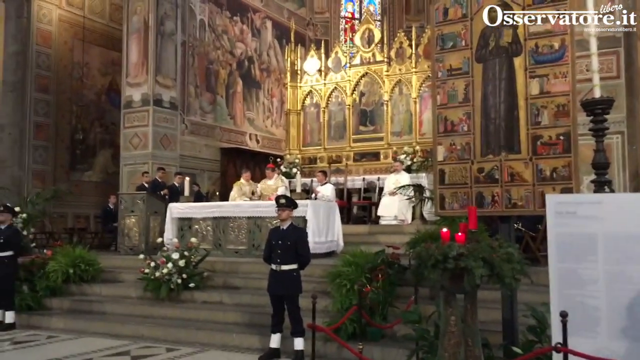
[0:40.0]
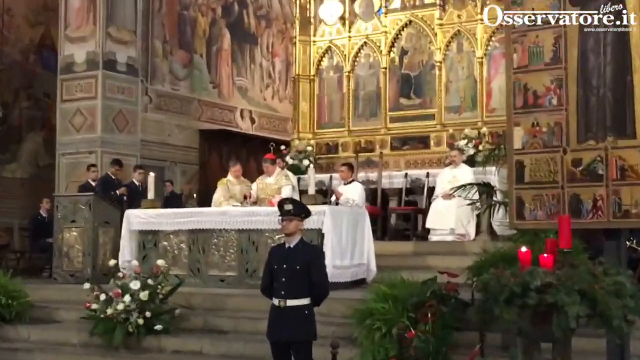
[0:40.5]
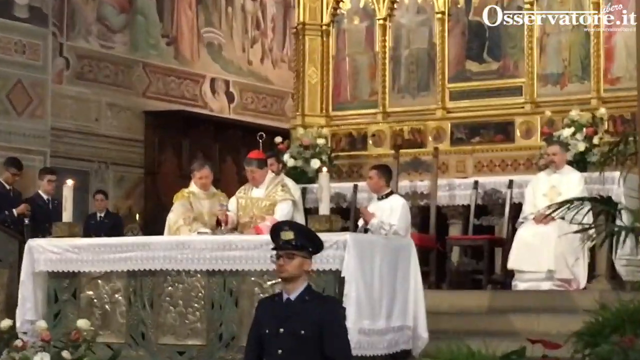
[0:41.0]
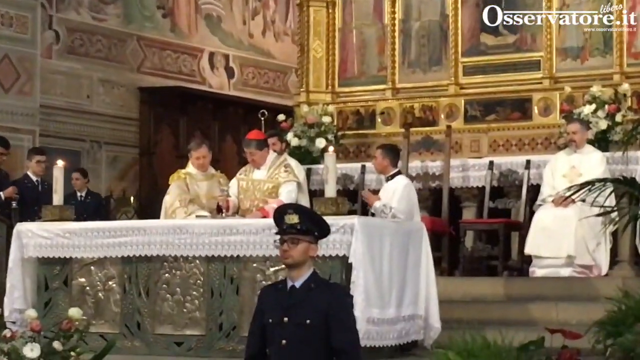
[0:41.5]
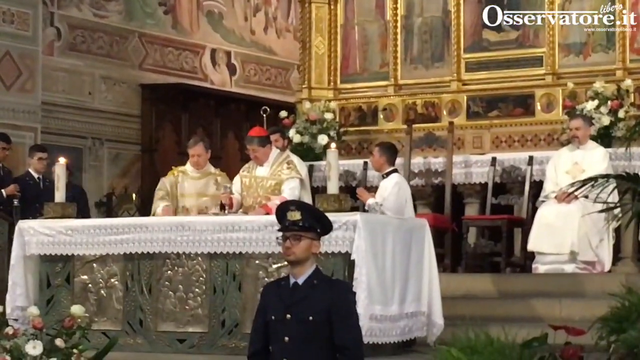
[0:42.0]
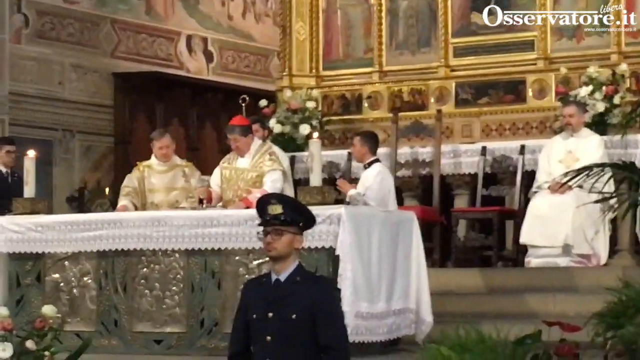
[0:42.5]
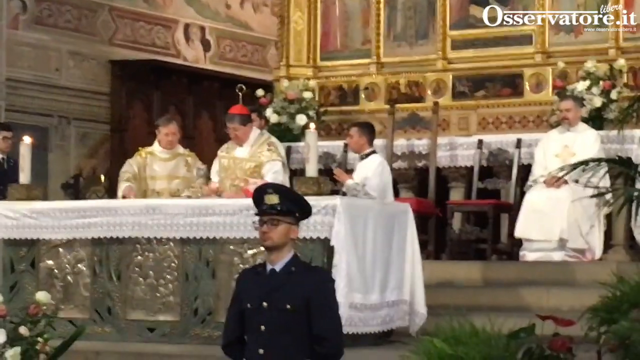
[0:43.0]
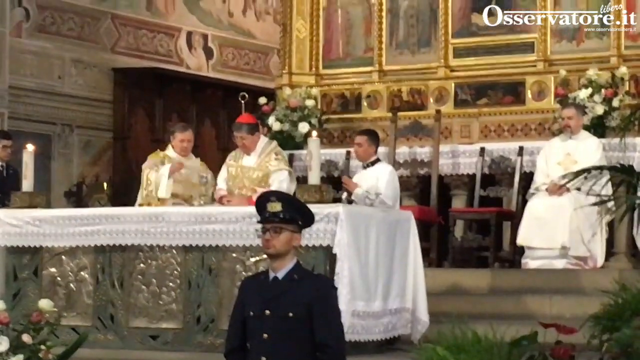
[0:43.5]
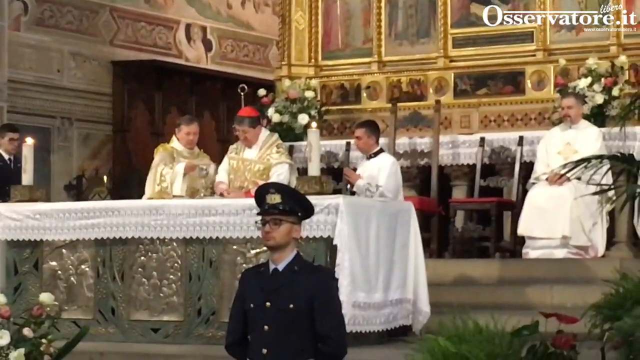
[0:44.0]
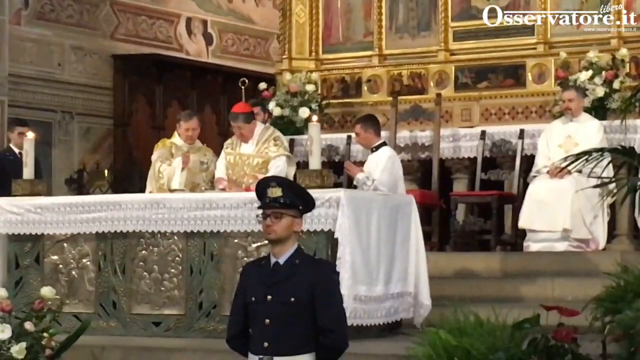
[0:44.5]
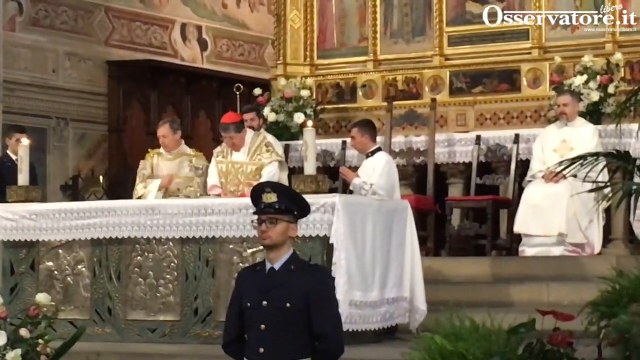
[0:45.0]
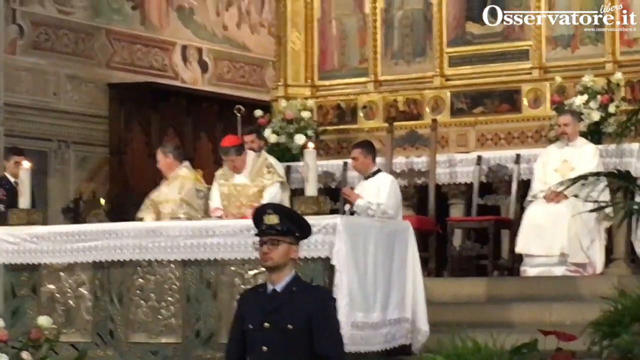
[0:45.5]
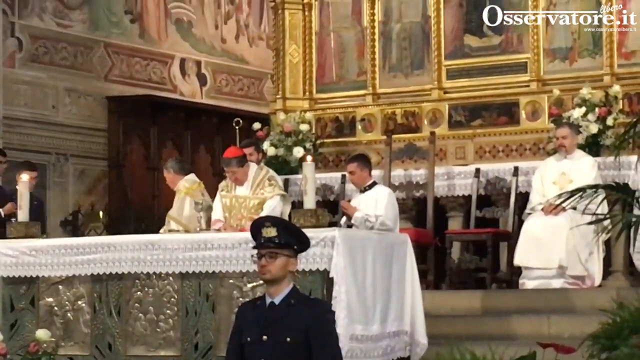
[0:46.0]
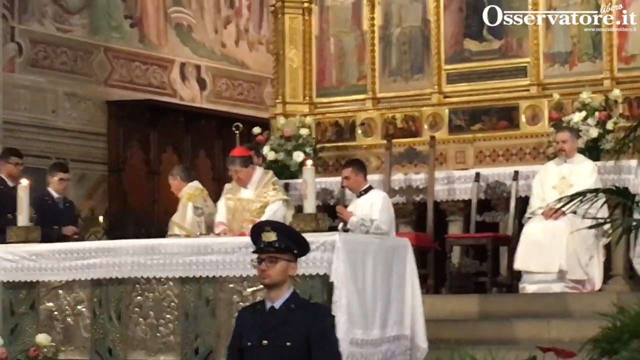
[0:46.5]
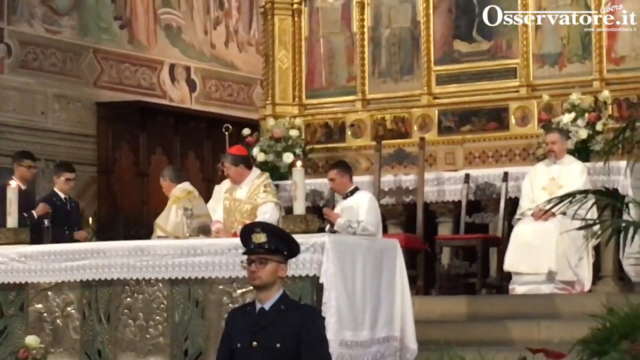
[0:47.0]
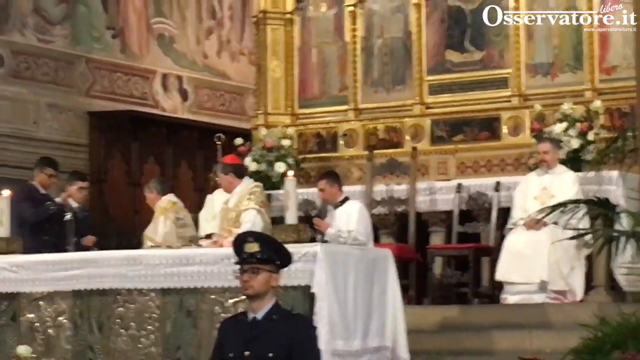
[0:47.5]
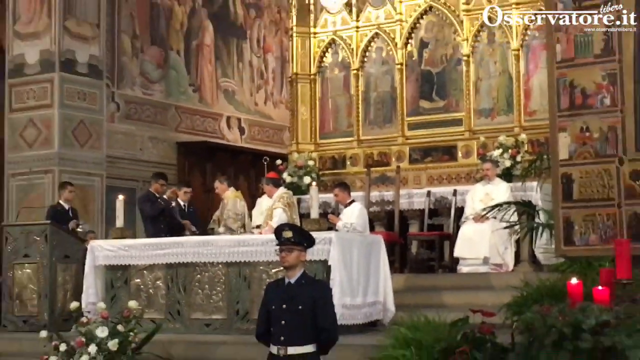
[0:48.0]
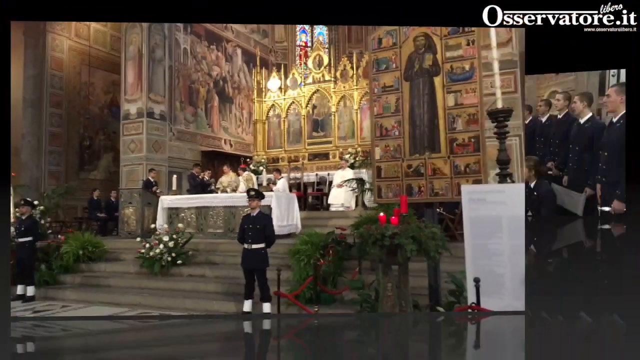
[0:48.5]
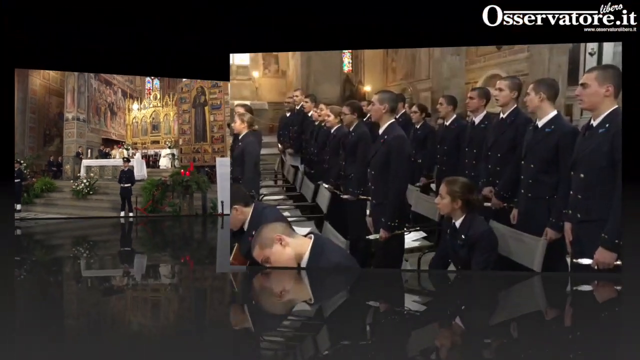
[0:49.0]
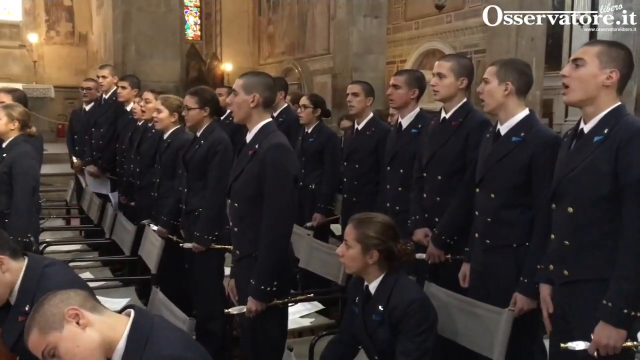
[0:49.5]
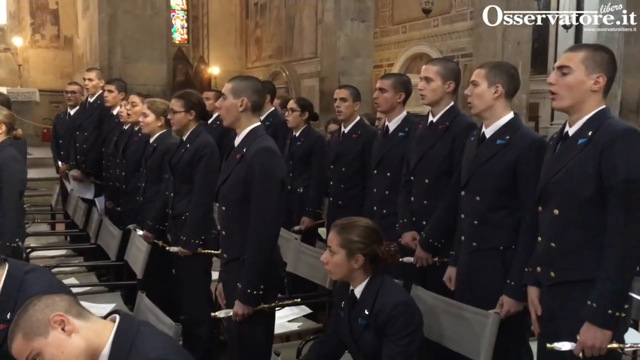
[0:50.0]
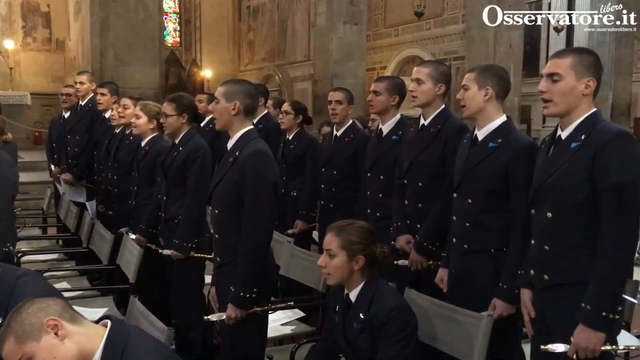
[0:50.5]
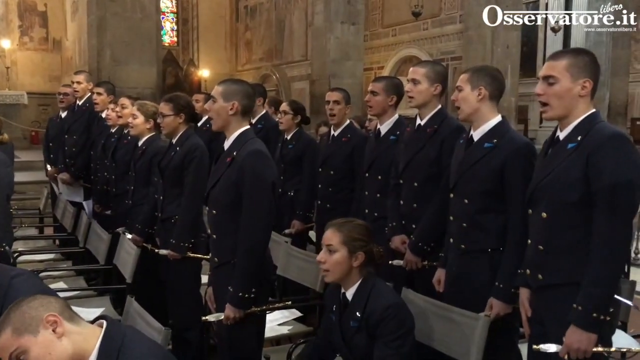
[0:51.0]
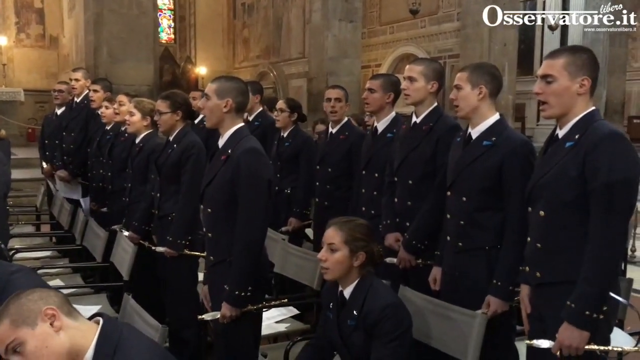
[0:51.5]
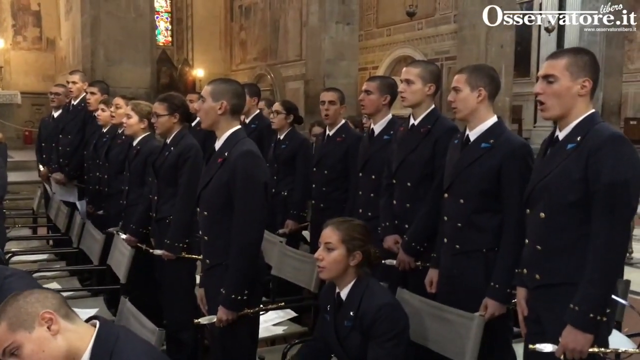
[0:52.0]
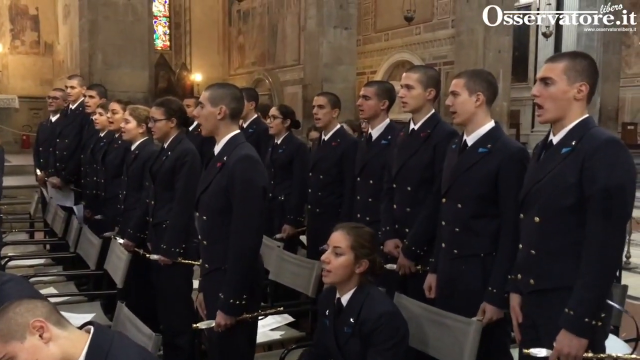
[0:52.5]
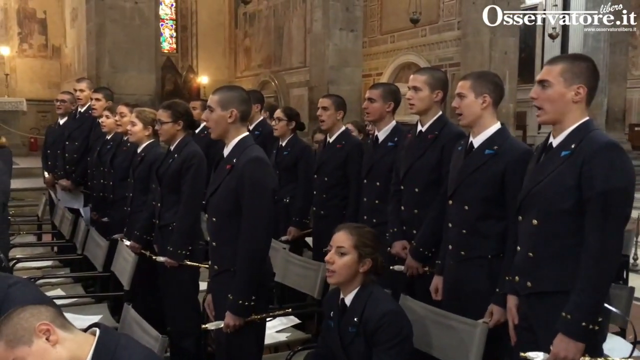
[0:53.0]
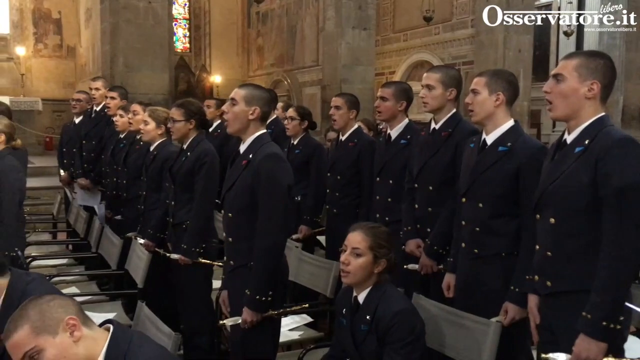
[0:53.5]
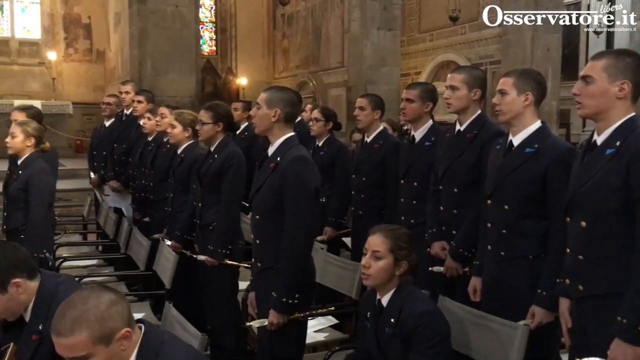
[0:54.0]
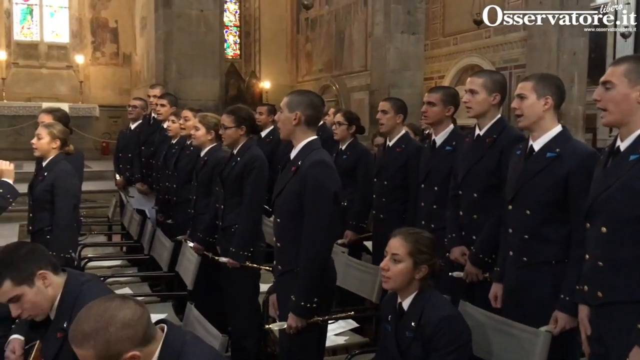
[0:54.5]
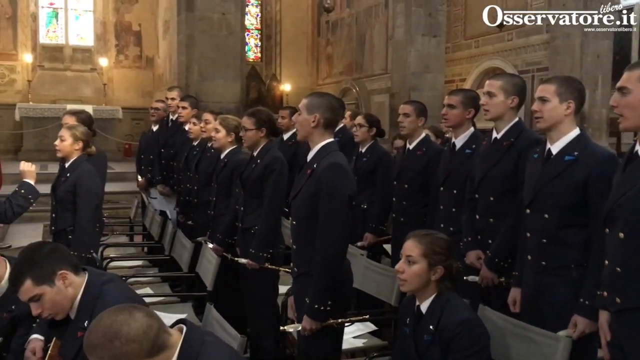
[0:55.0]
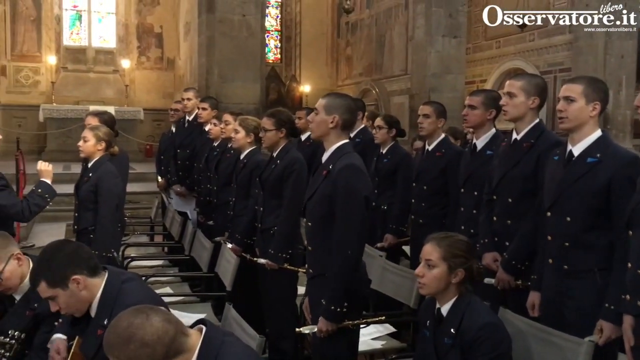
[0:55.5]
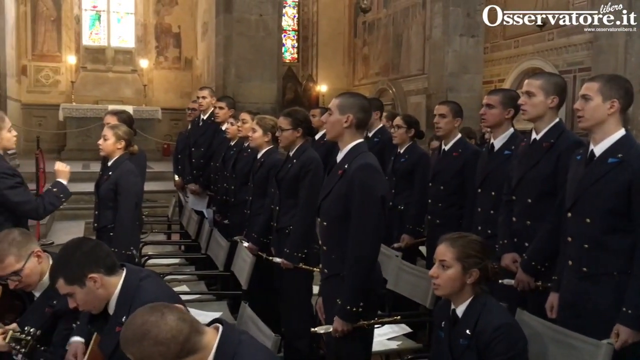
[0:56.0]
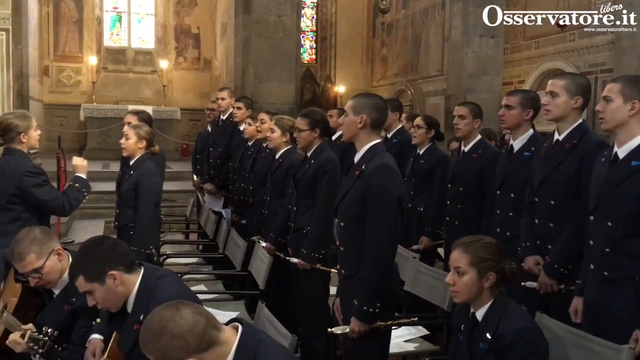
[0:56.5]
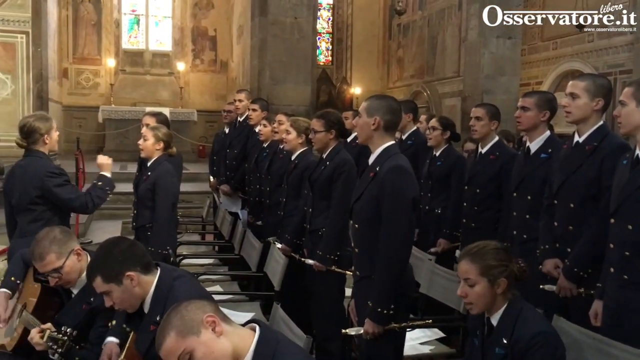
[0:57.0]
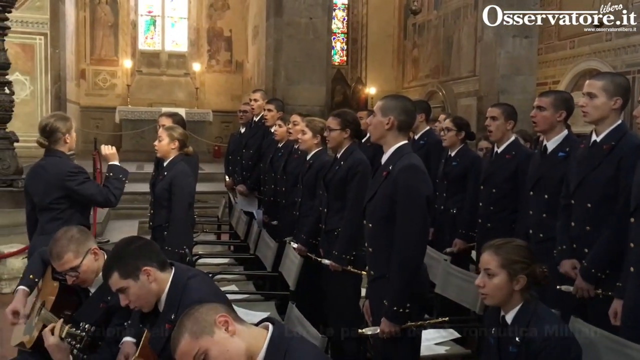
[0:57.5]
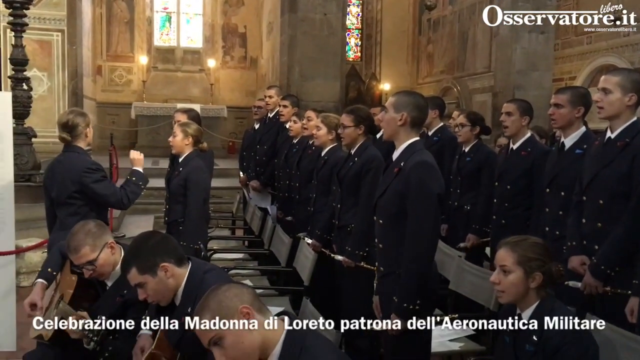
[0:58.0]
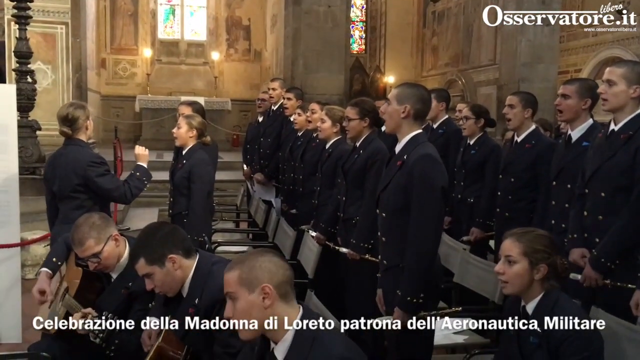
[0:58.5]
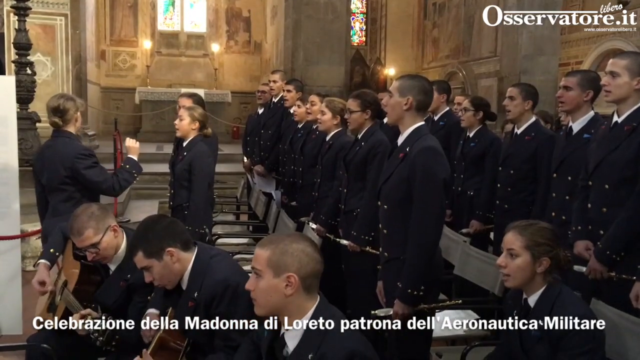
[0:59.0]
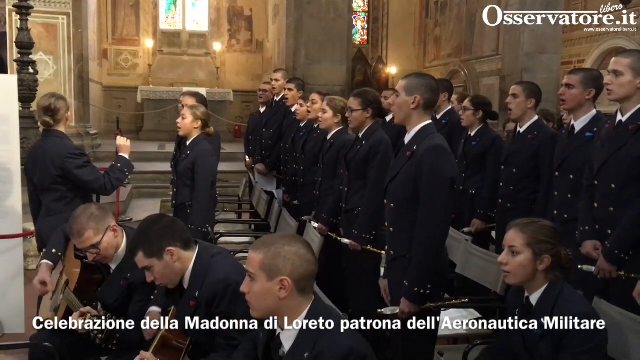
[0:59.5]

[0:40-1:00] The view focuses on the people on stage; one of them, wearing white and gold with a red cap, seems to be the leader in the center. The camera zooms back to the choir singing, with the guitarists in the foreground. More text, apparently in Italian, appears on the screen. The video mixes shots of the stage: a leader who looks to be seated in the background wears white with what seems to be a gold cross. The singers are shown again with the backdrop visible. Some of the text seems to read something about the military, suggesting it could possibly be a military choir. There is a lot of gold, etchings in the stone, and etched glass like that seen in a church. Many of the singers have shorter hair, including the males.